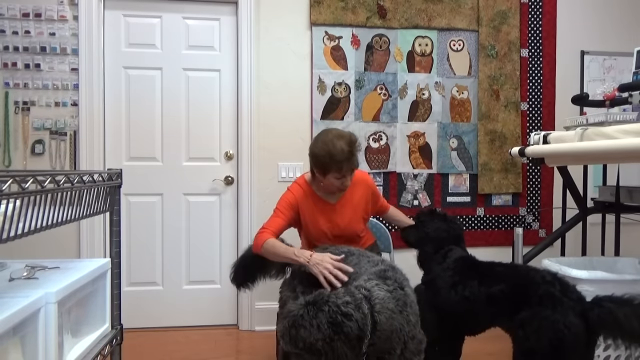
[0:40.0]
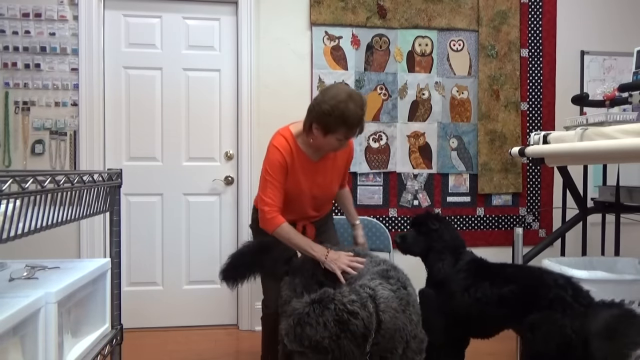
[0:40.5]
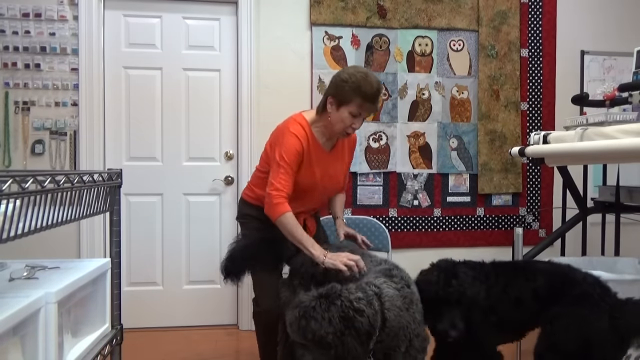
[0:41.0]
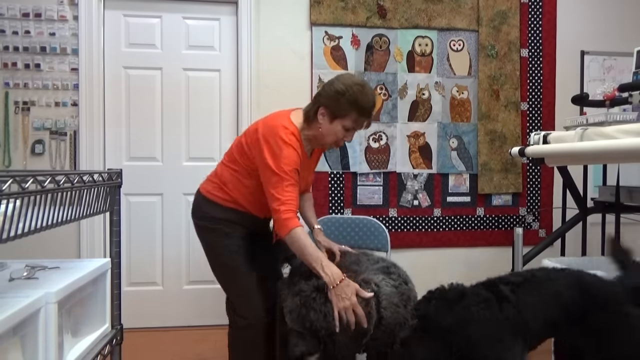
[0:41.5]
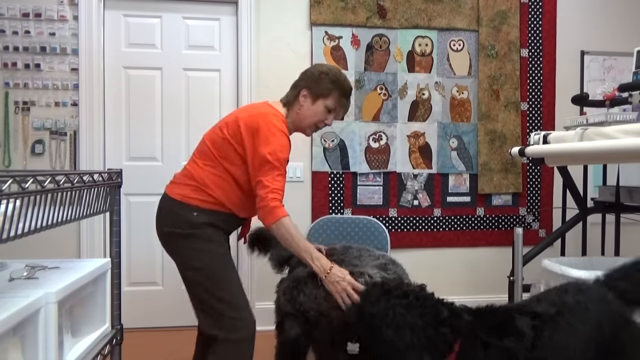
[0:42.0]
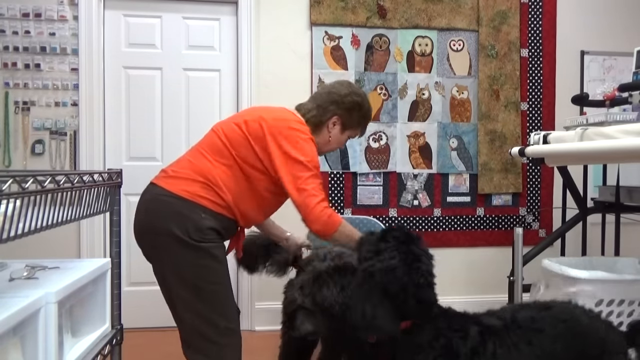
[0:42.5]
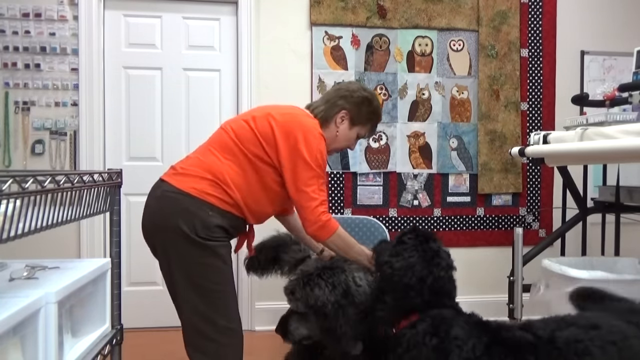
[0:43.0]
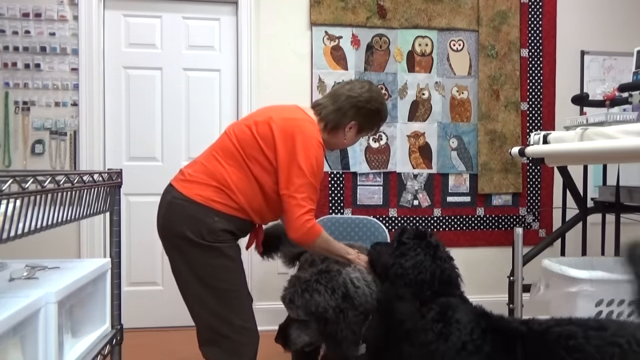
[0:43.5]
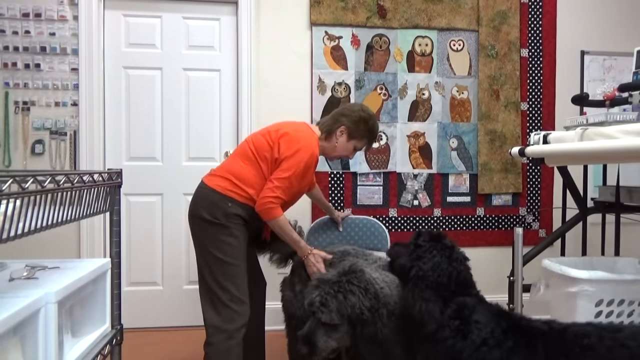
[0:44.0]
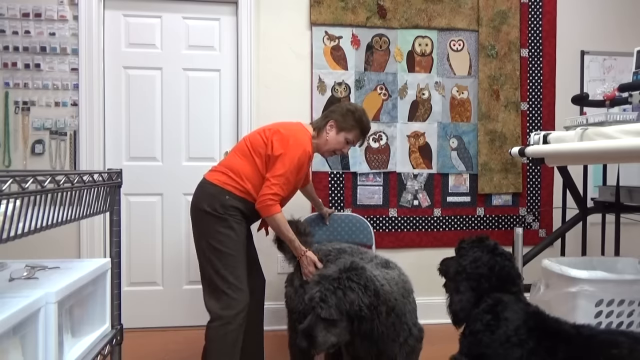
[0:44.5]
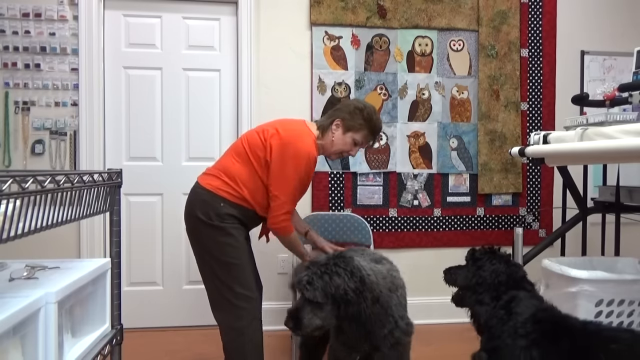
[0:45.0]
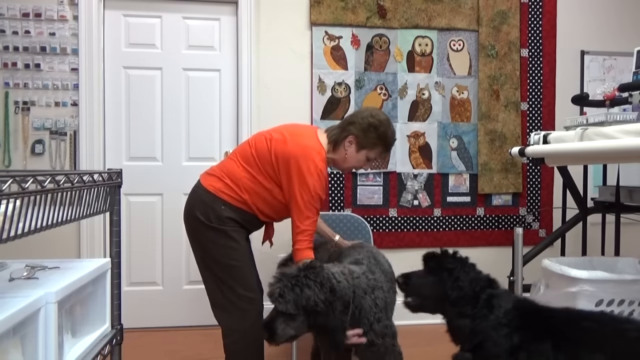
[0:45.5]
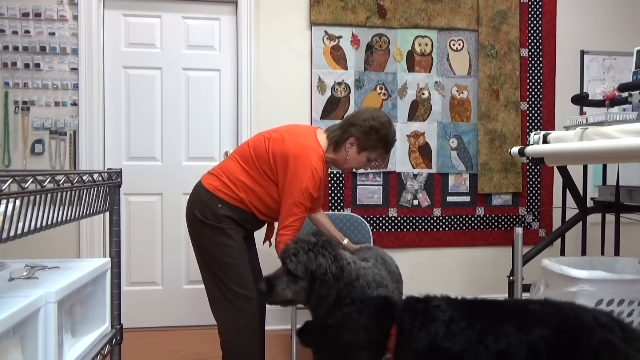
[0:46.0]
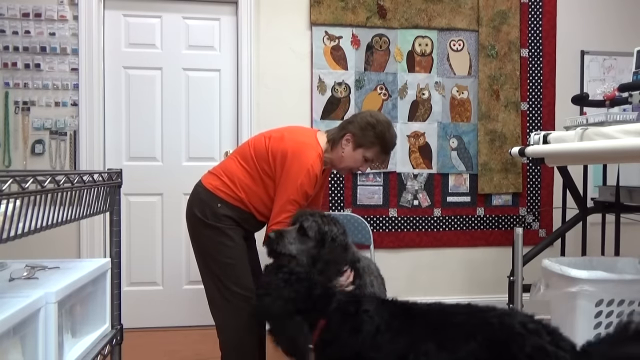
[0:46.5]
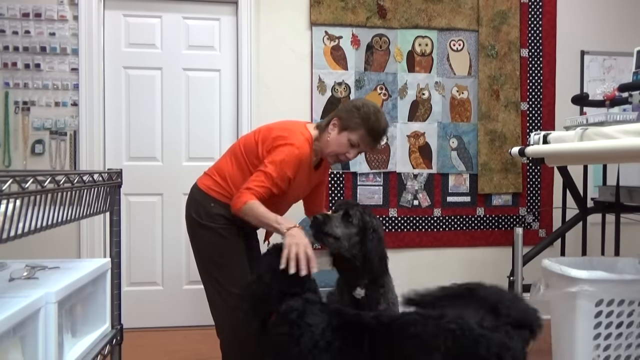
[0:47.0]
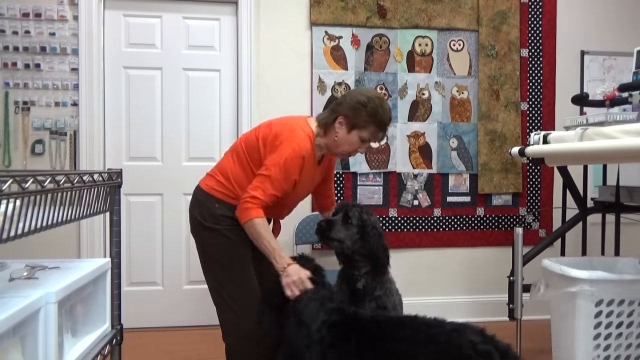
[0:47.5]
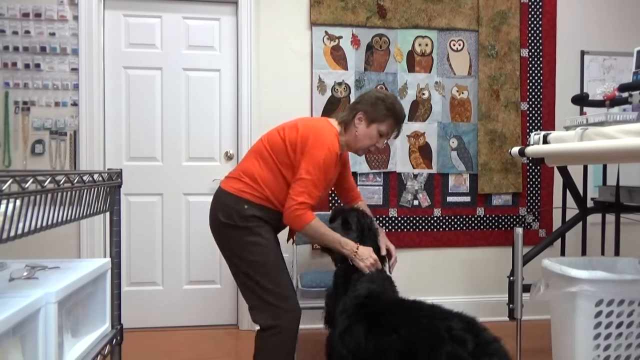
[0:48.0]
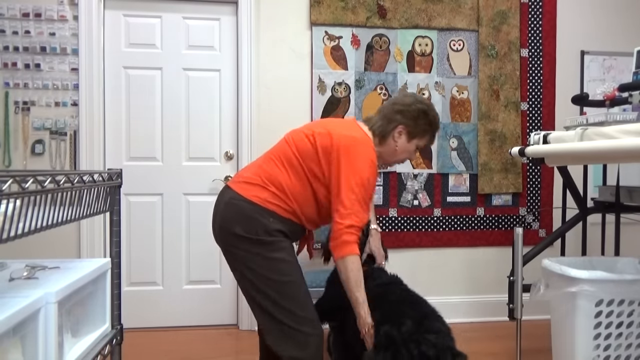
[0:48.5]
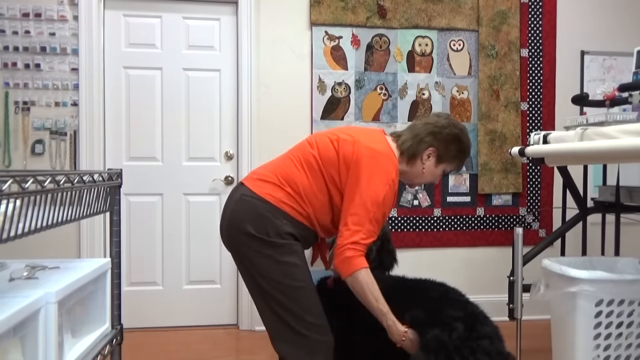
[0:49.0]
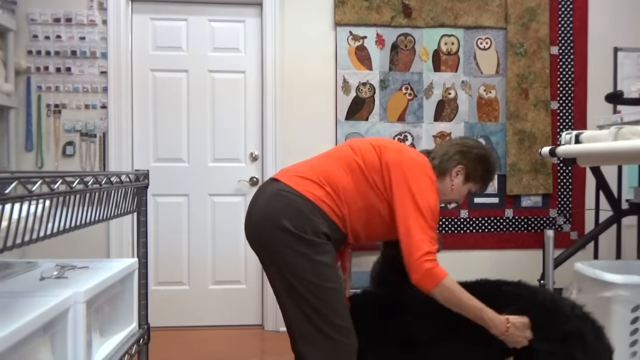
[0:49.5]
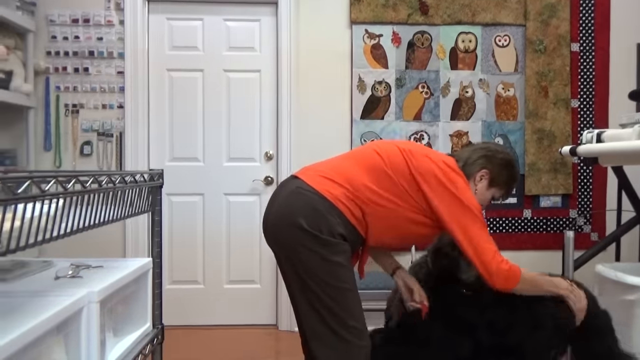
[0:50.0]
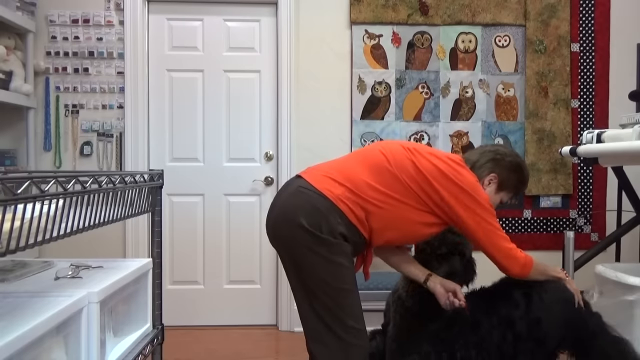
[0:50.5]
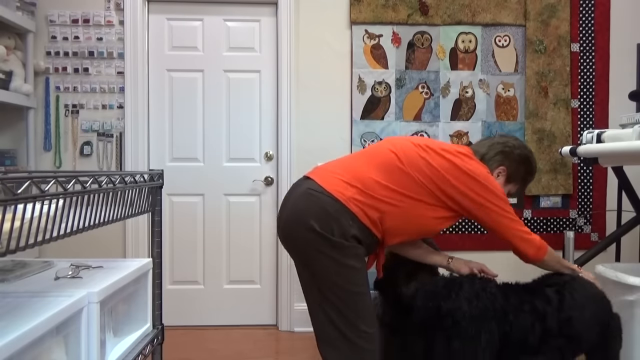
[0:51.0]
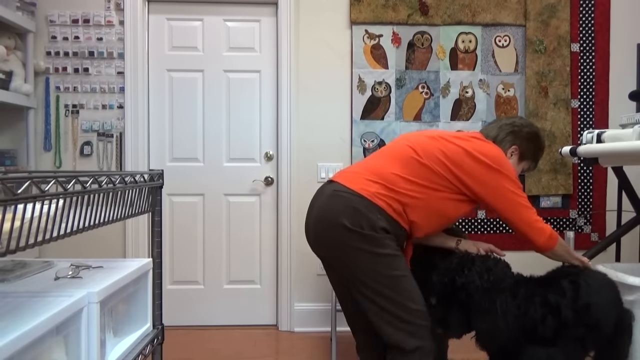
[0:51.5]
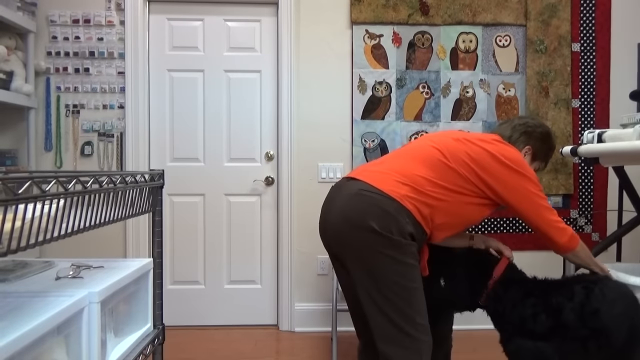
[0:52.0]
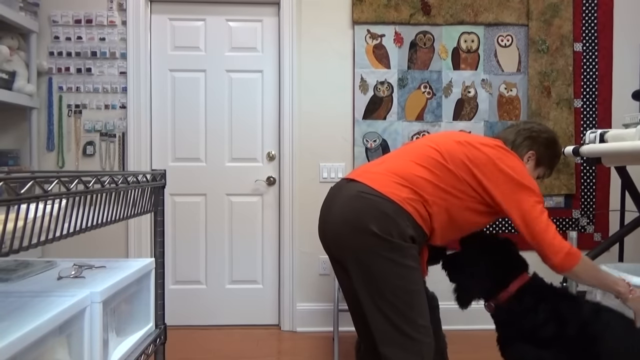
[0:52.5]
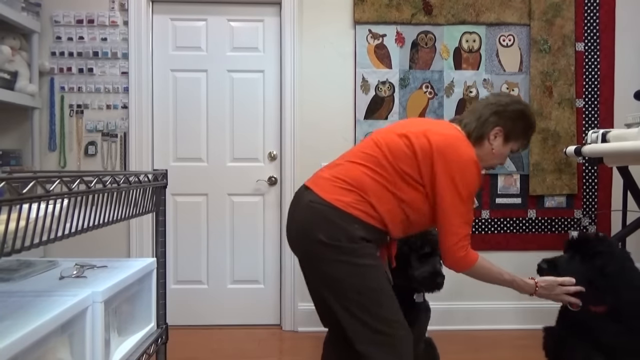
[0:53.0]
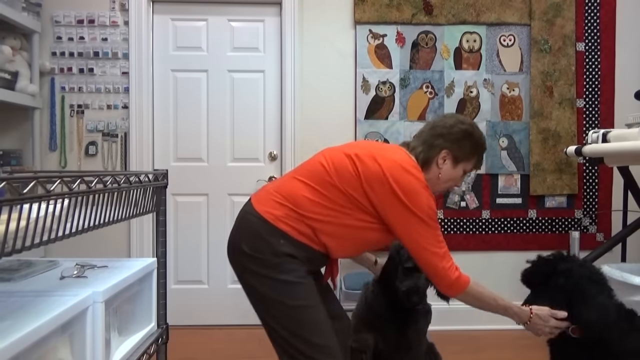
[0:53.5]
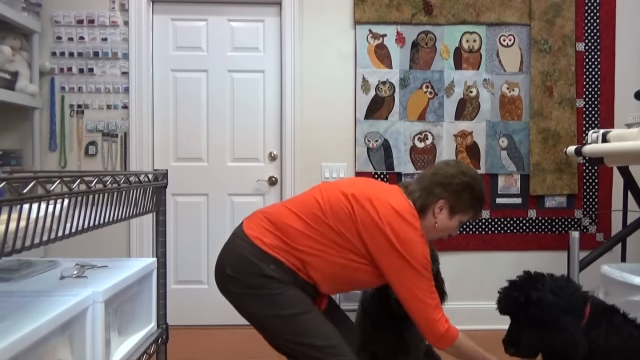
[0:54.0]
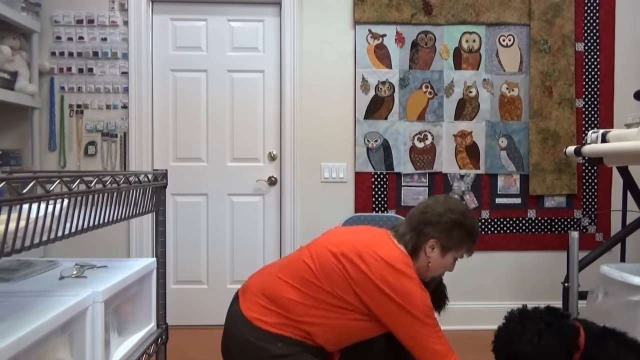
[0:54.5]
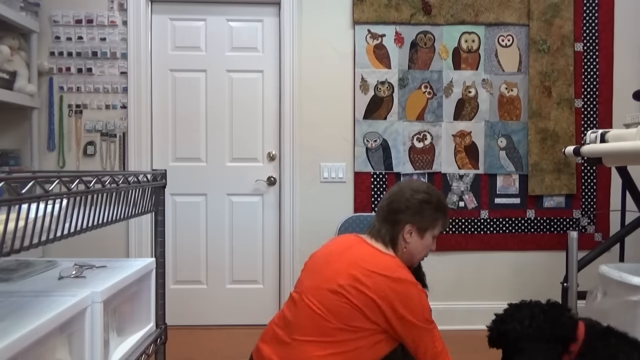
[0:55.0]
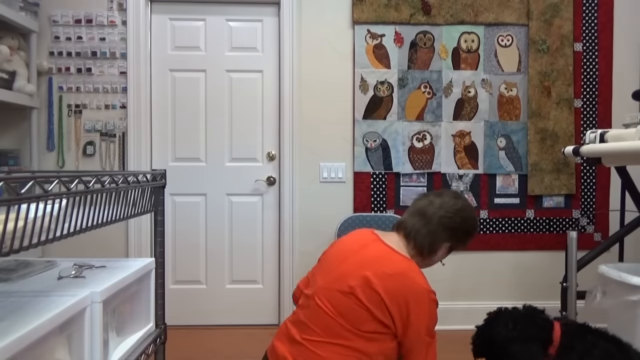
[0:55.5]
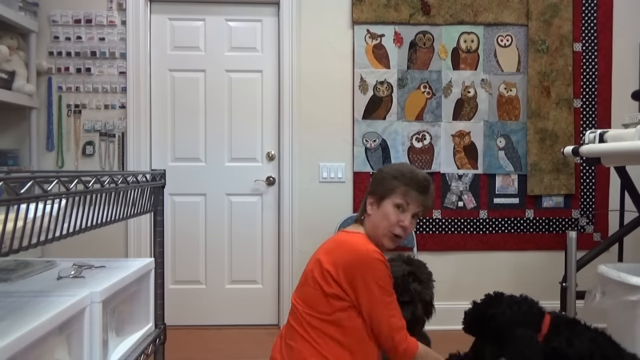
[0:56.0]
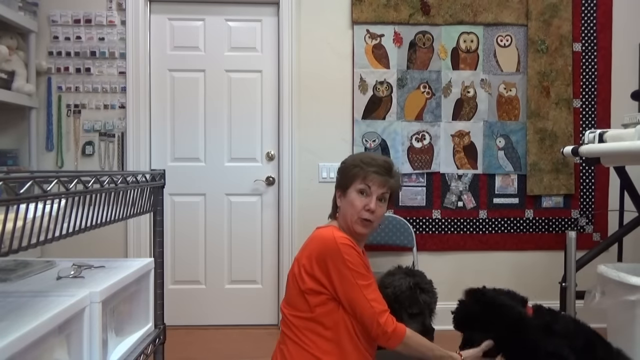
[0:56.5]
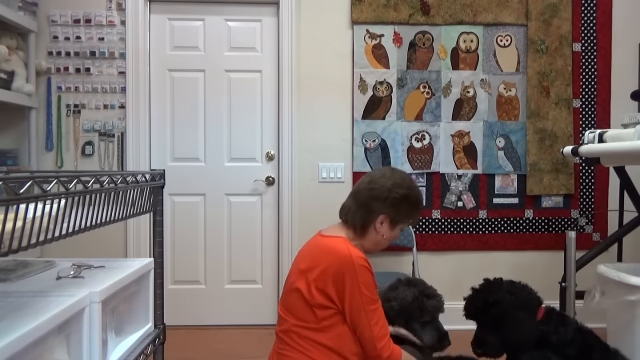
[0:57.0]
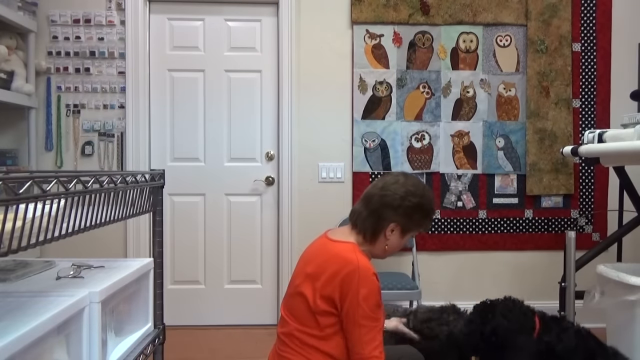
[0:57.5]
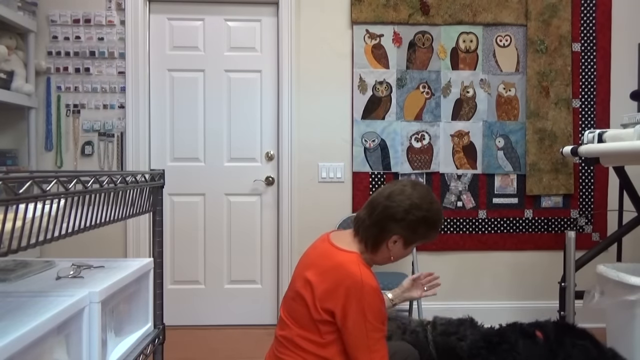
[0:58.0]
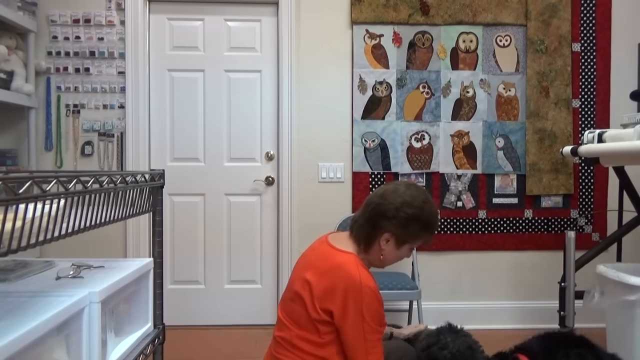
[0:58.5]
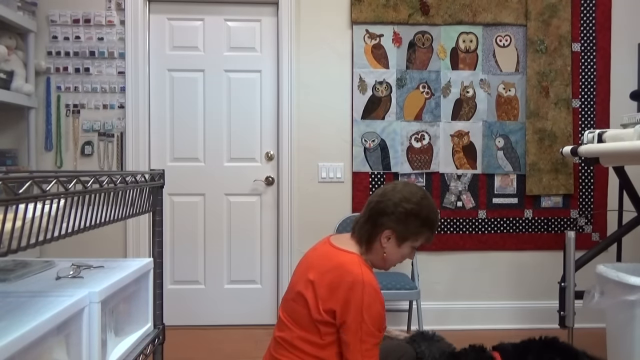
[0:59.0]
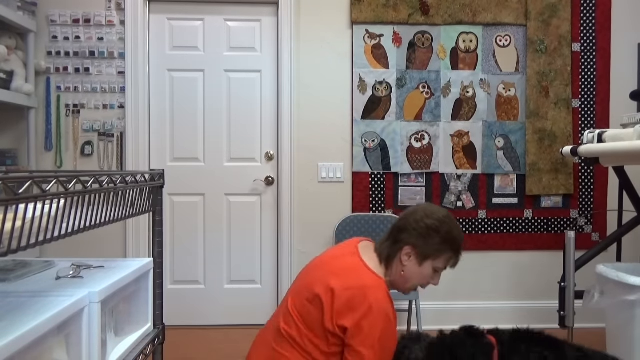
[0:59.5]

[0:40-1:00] The woman gets up from the chair while still playing with both dogs, which look like they are starting to calm down and sit. She squats down, playing with and rubbing the dogs at the same time, then immediately gets back up, and the video cuts off a little. The dogs seem well trained. They have dog tags and both have leashes on: the one on the right has a red leash and the other has a black leash.